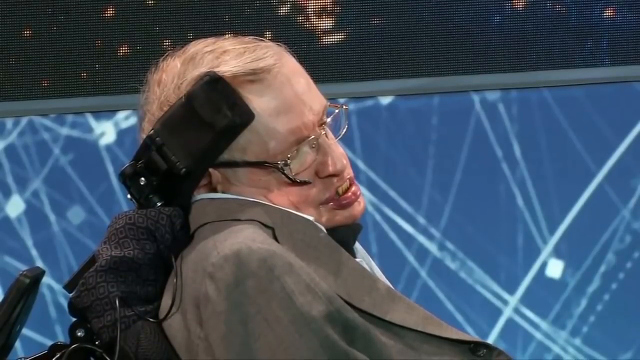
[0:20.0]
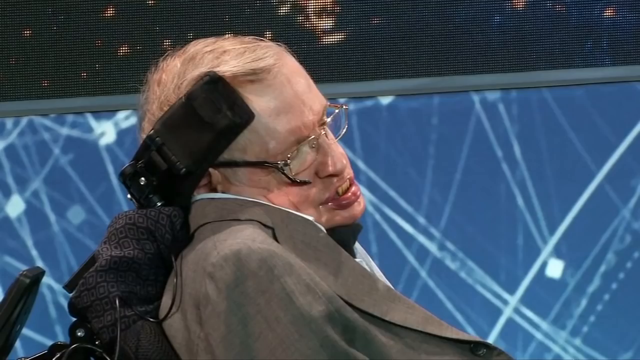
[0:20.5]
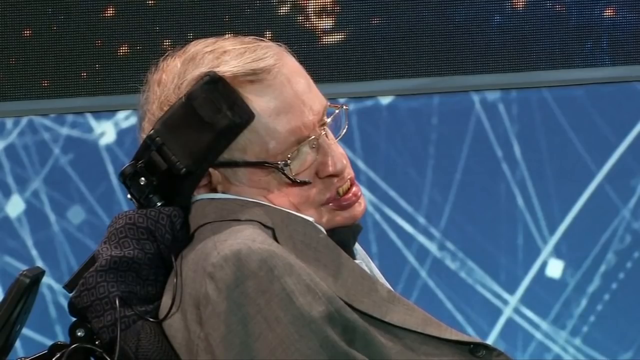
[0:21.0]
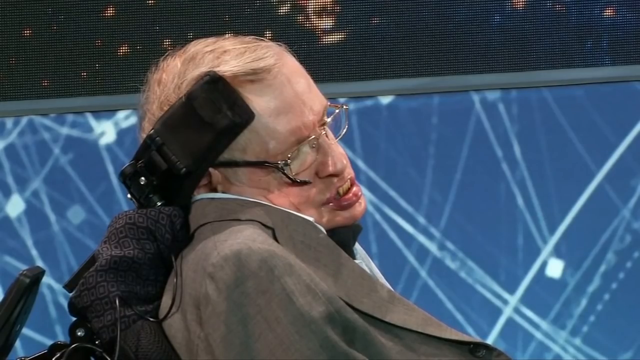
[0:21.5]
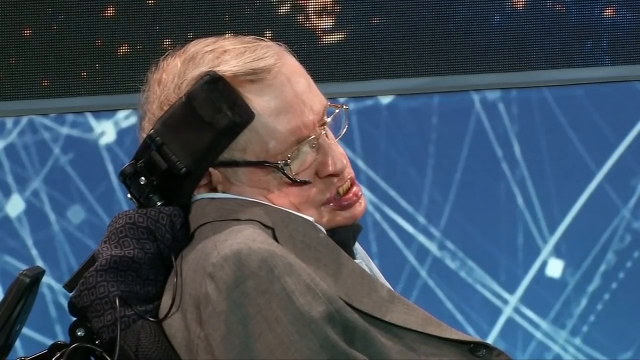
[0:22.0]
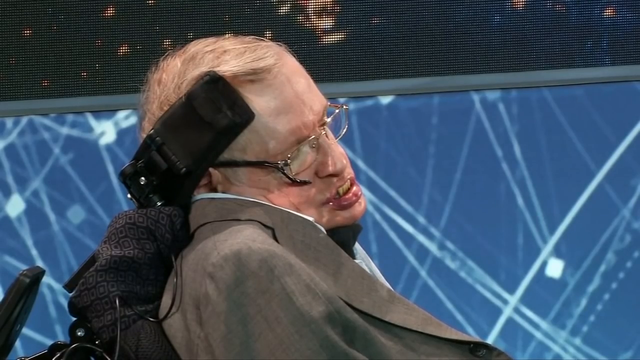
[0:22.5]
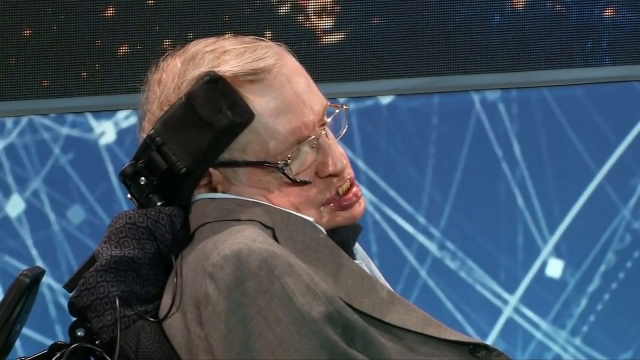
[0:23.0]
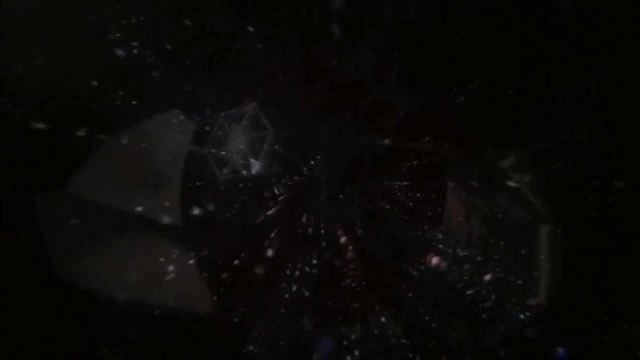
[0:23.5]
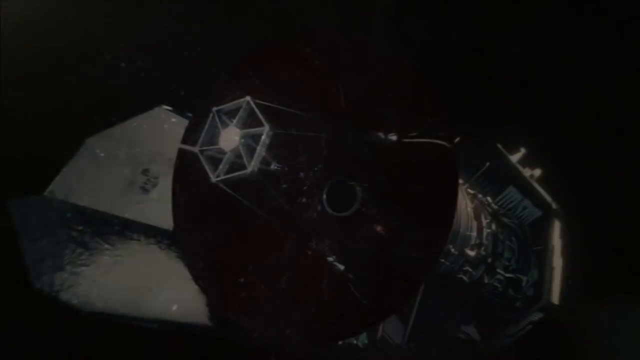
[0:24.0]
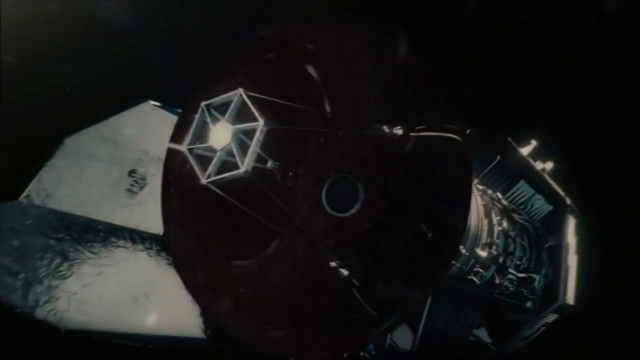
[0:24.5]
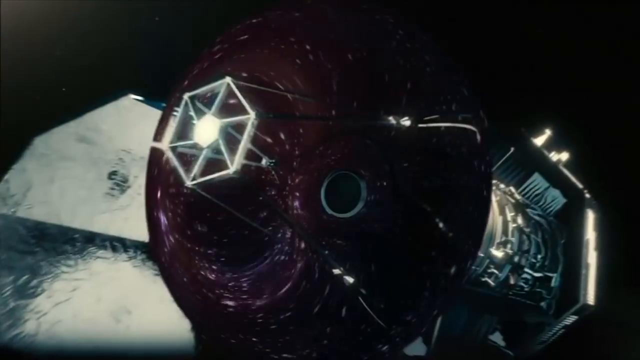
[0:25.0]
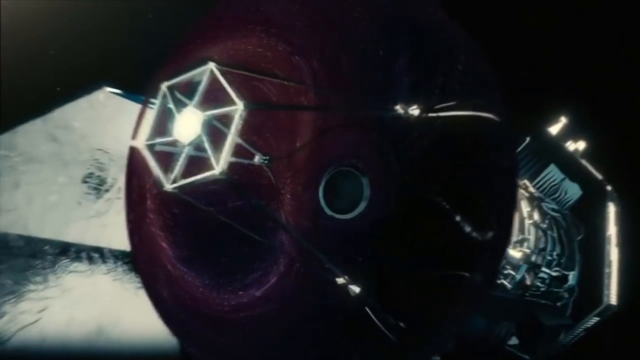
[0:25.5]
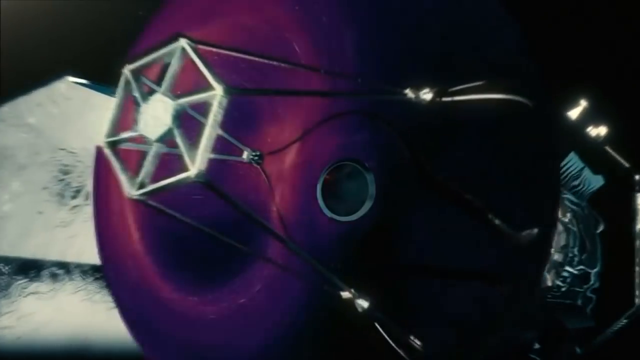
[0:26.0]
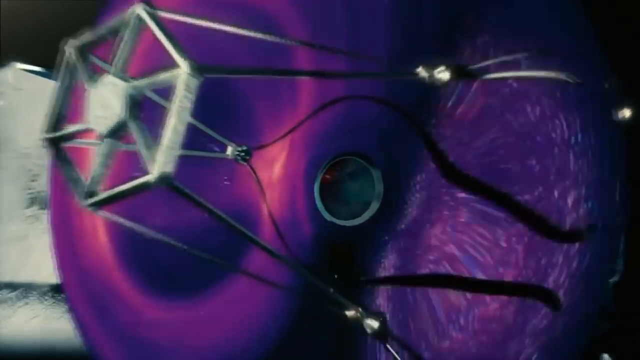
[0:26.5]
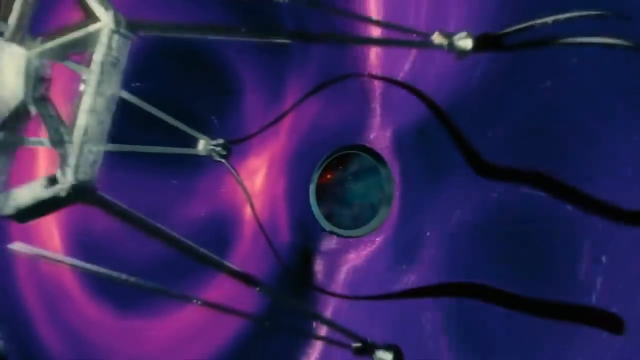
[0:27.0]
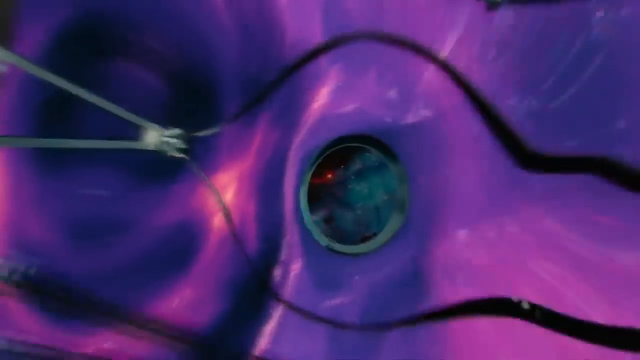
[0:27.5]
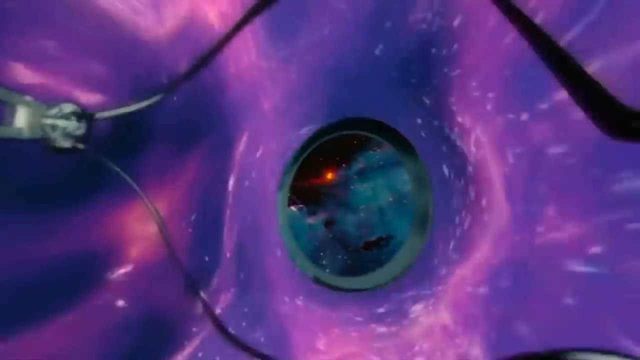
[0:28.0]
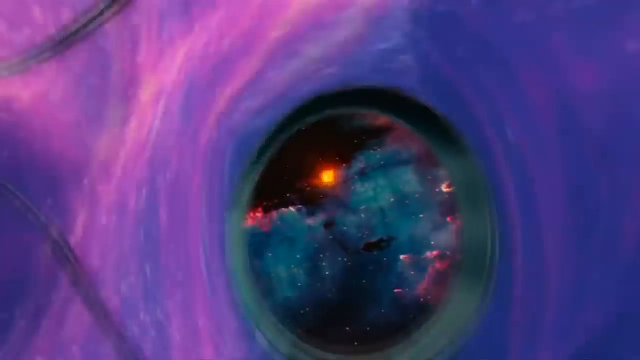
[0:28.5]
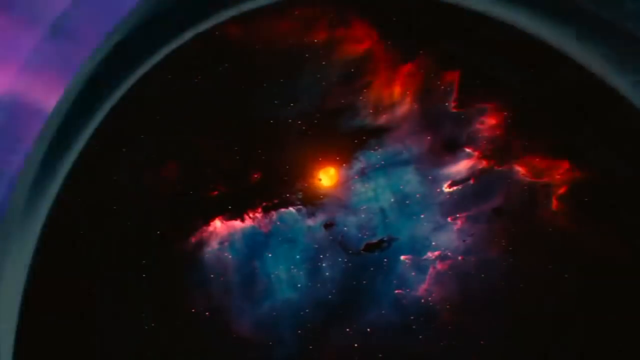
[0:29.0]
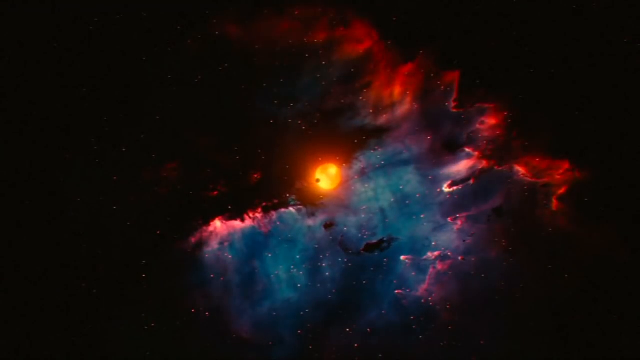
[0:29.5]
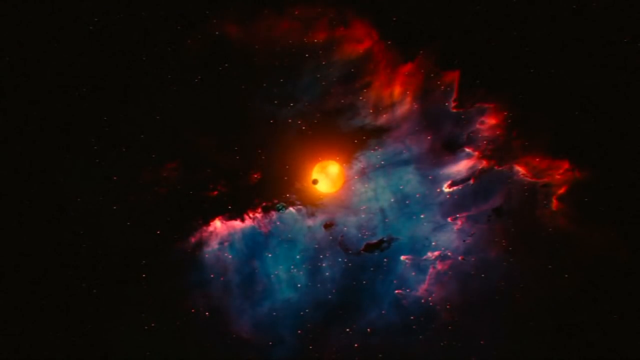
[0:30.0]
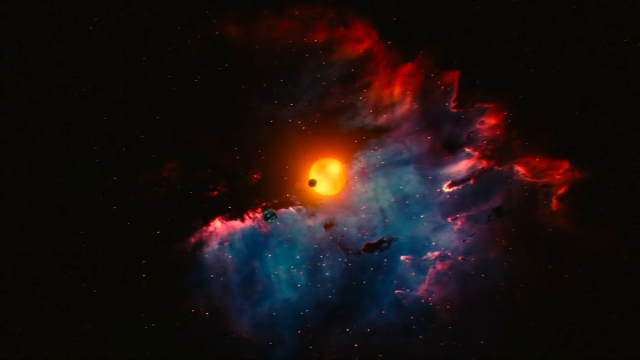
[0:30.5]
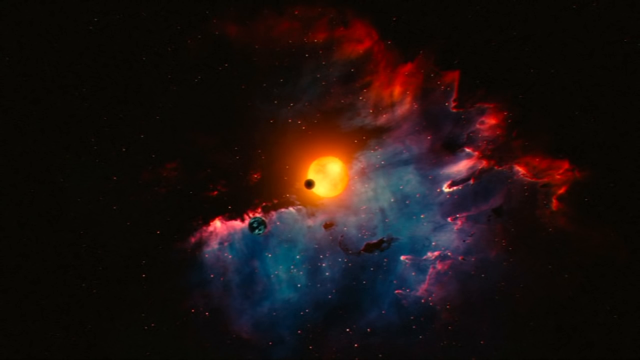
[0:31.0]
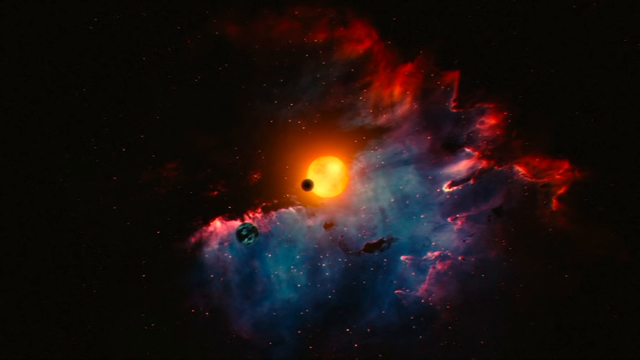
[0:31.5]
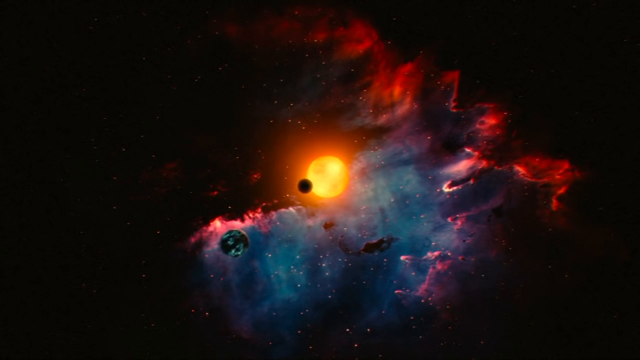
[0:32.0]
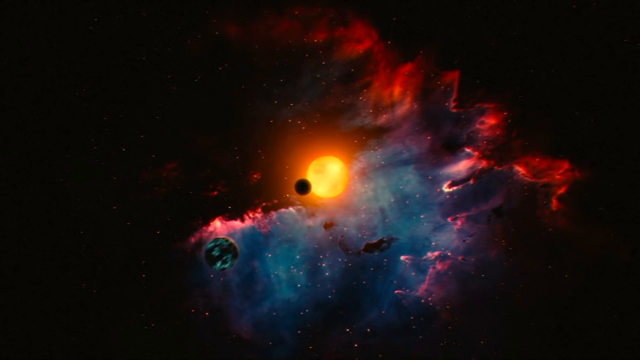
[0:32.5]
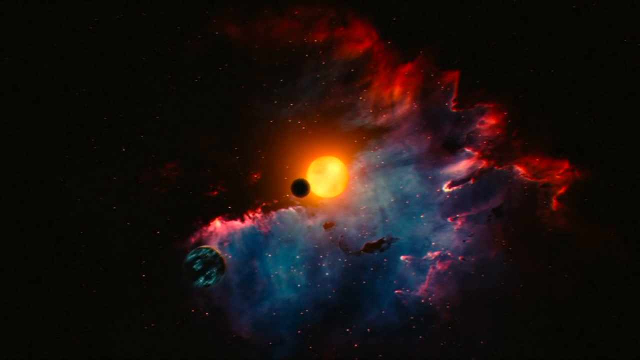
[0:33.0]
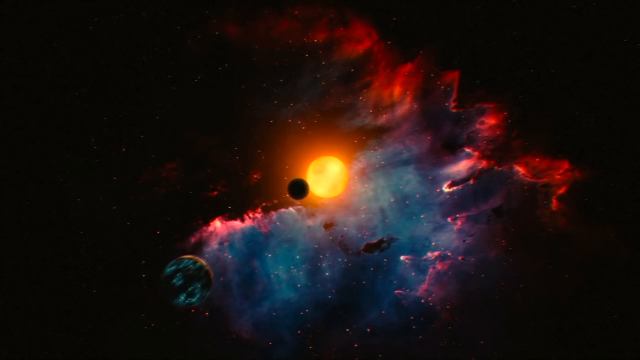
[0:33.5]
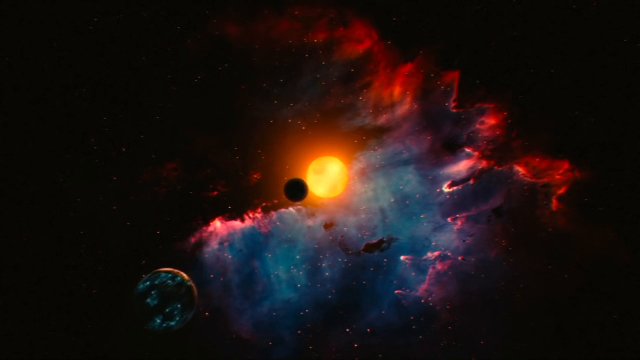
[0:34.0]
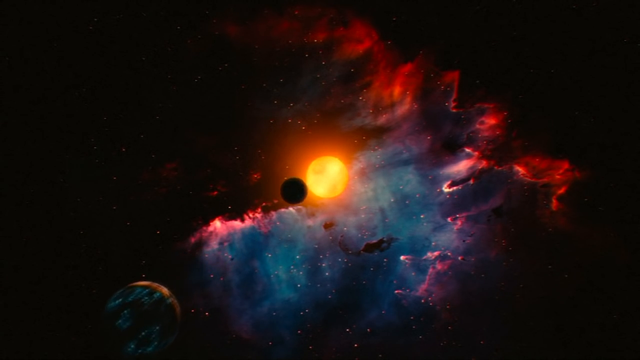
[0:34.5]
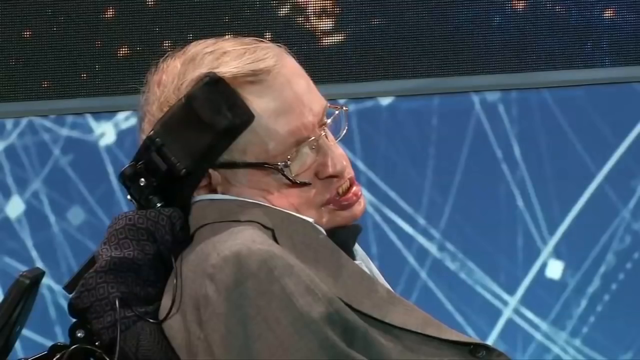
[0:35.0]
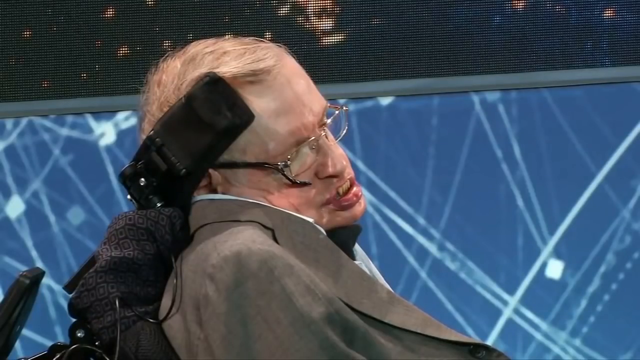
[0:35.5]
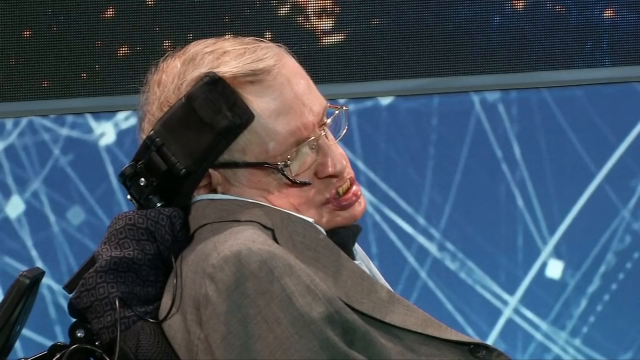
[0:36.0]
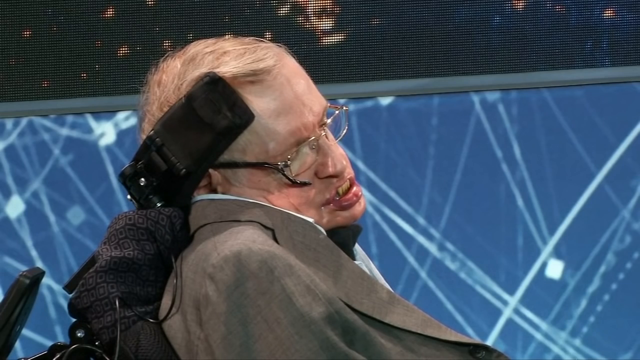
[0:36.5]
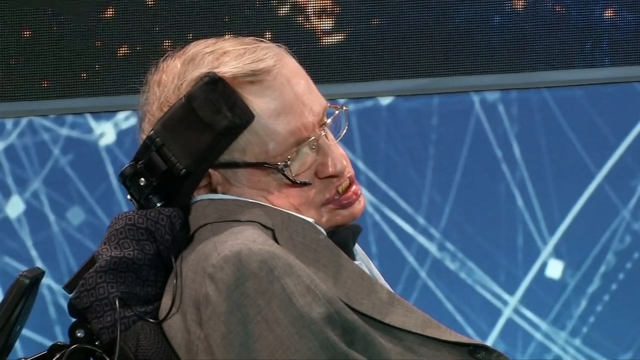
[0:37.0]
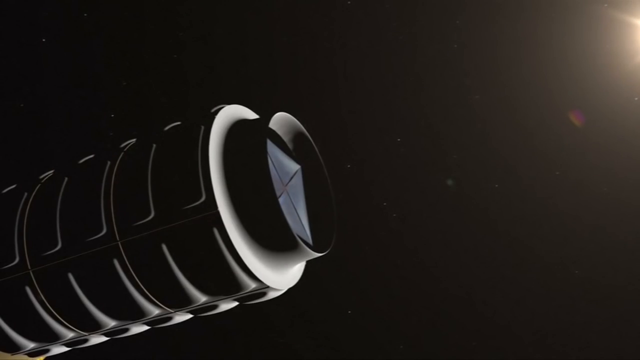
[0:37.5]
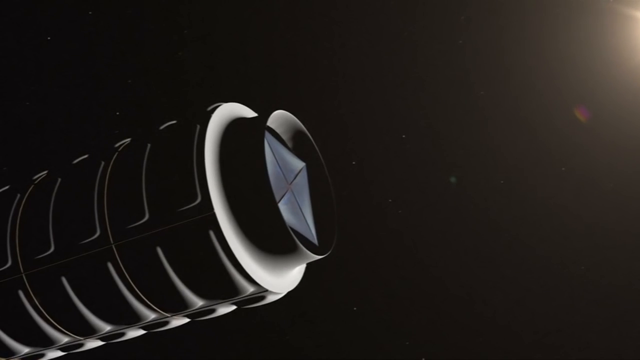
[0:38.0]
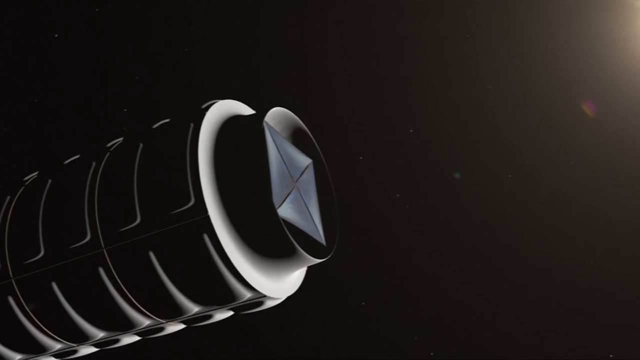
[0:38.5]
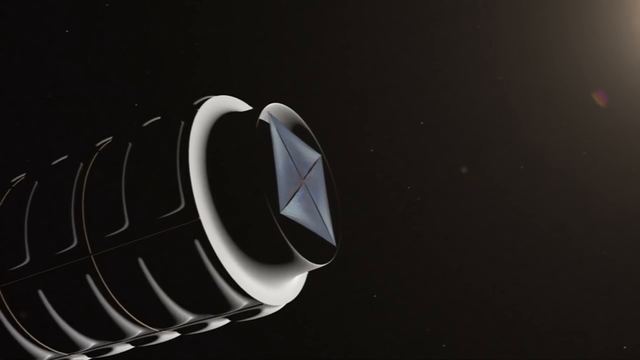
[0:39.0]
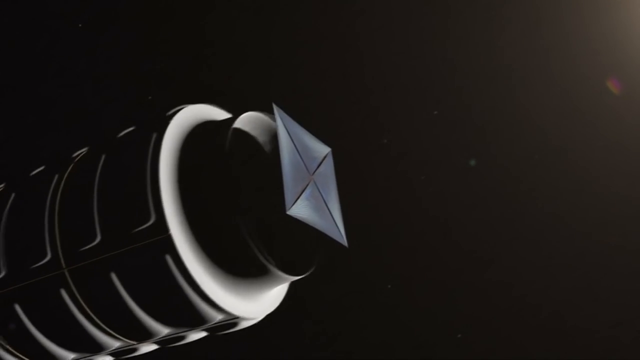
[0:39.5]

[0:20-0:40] A spaceship or something similar, possibly a space station, hurtles through the atmosphere. The colours are purples and blues; then a hole appears and the camera sort of goes through it. The sun and stars are visible, and the sun, or possibly another planet, moves towards the viewer, slightly getting larger. Rocks or other space material move through the atmosphere. The video cuts back to Stephen Hawking sitting in his chair with his head resting on a headrest. It then shows some sort of satellite or rocket in space, the top of which slides out and comes apart from the body. This looks like a computer simulation rather than a real-life object, and its function is unclear.